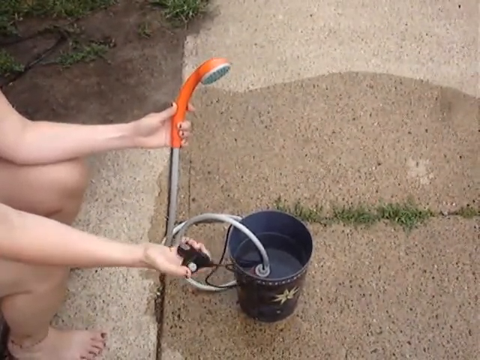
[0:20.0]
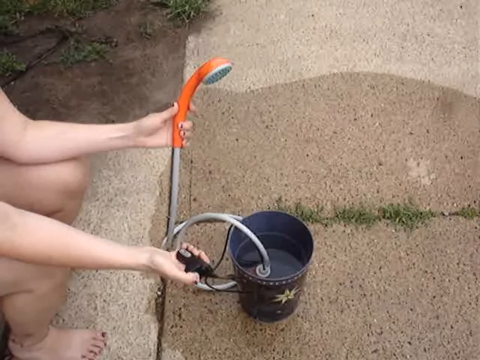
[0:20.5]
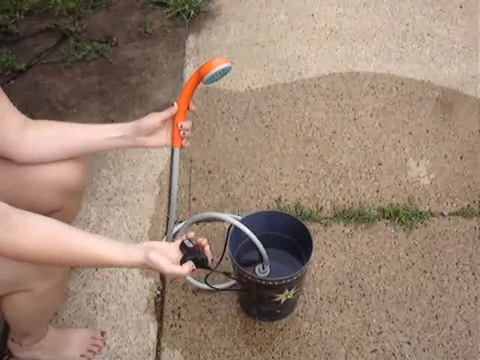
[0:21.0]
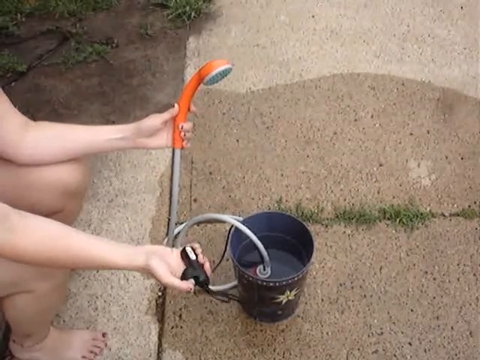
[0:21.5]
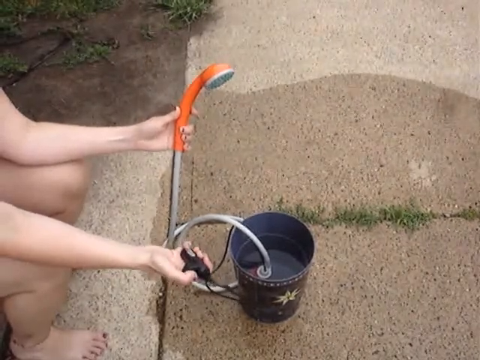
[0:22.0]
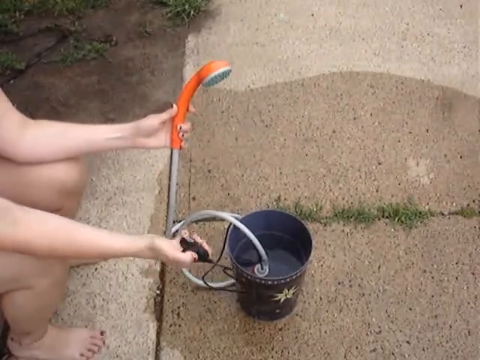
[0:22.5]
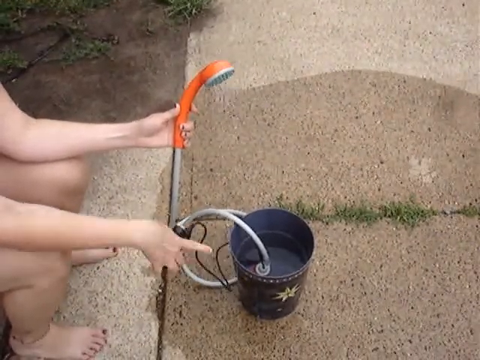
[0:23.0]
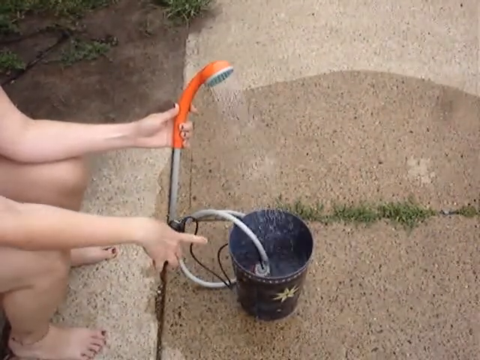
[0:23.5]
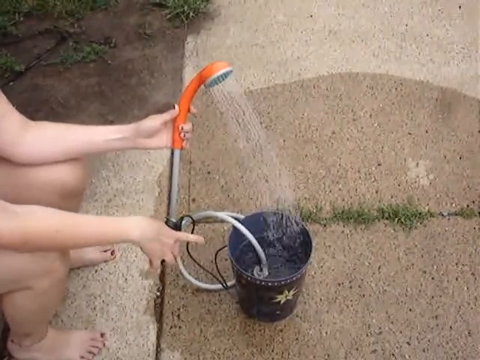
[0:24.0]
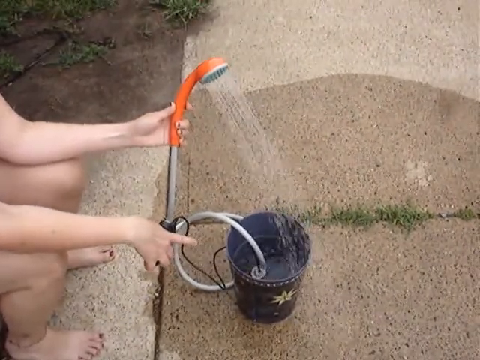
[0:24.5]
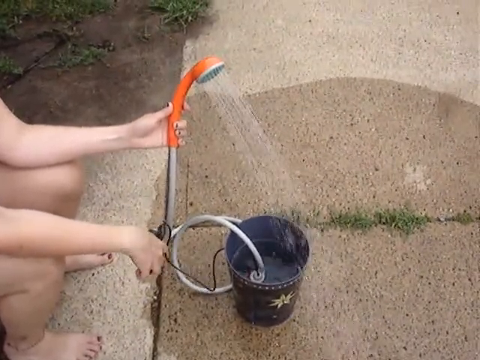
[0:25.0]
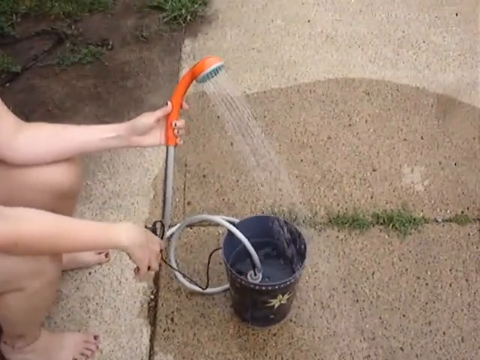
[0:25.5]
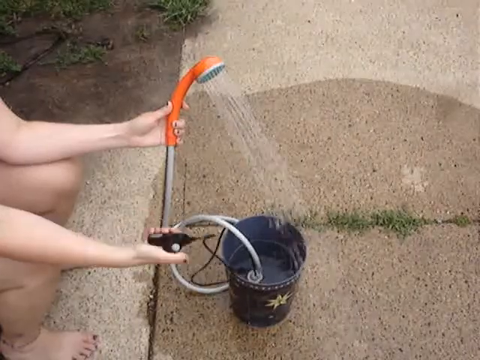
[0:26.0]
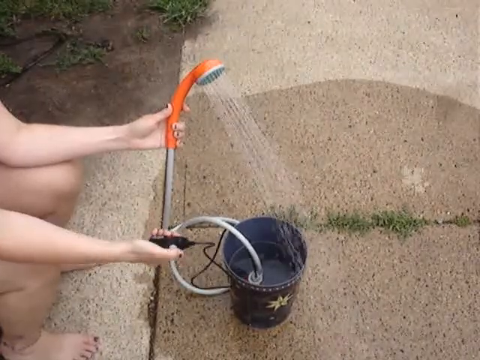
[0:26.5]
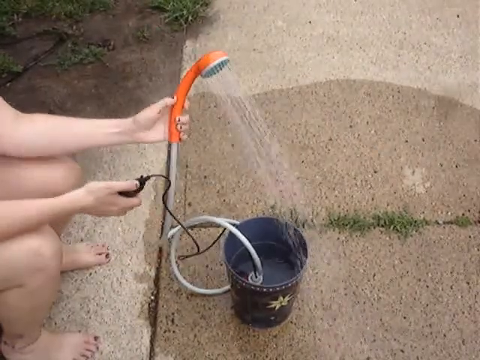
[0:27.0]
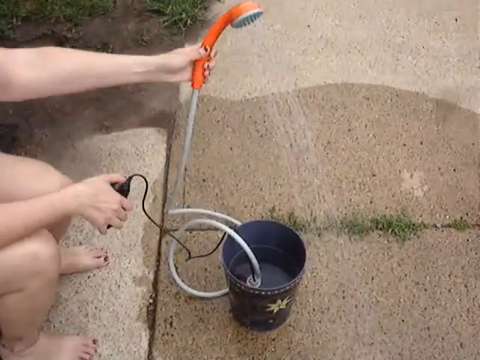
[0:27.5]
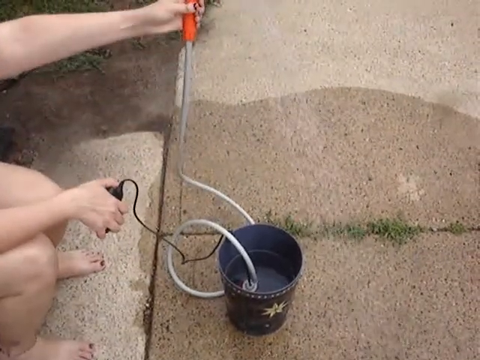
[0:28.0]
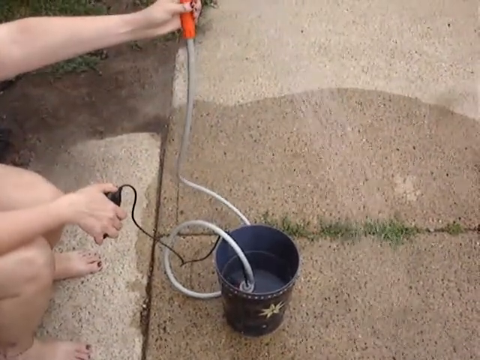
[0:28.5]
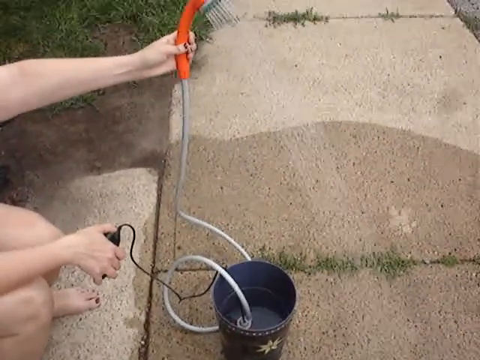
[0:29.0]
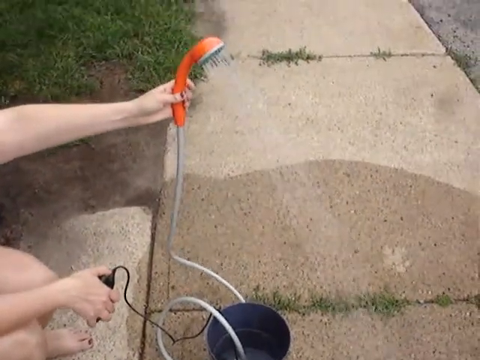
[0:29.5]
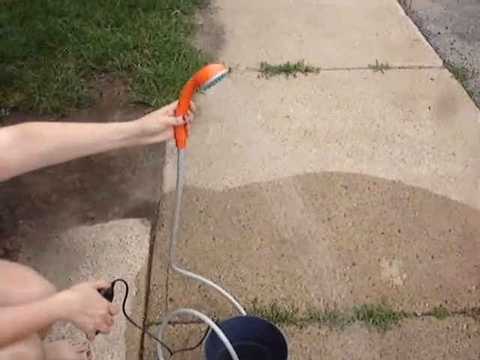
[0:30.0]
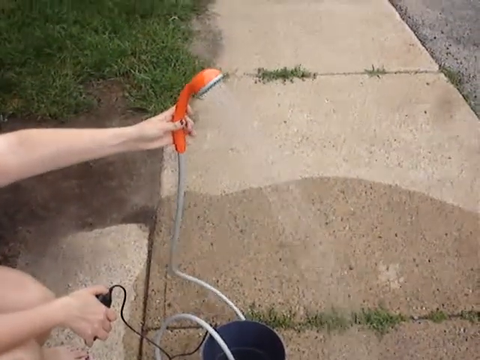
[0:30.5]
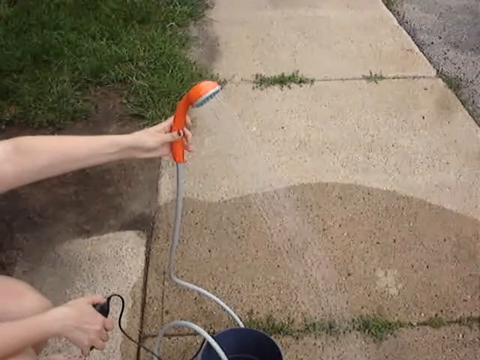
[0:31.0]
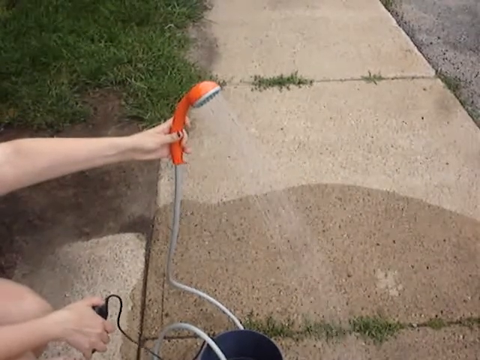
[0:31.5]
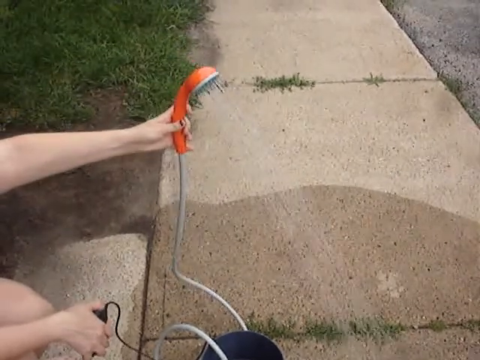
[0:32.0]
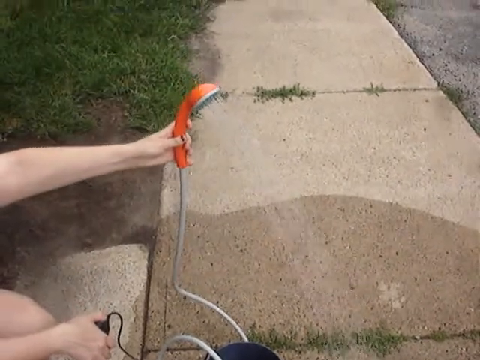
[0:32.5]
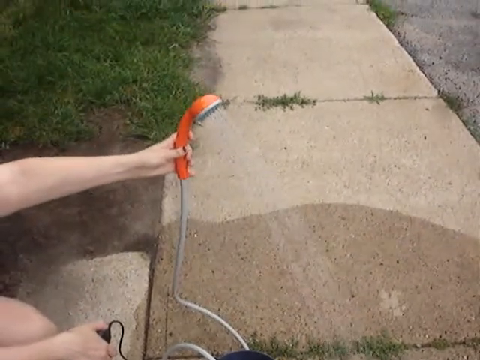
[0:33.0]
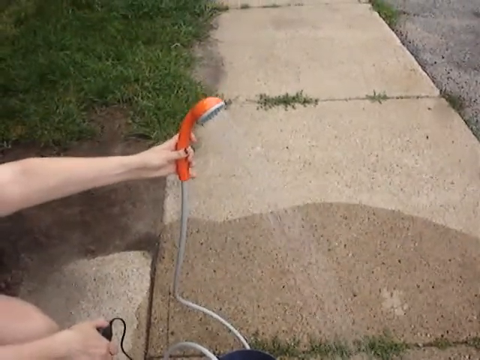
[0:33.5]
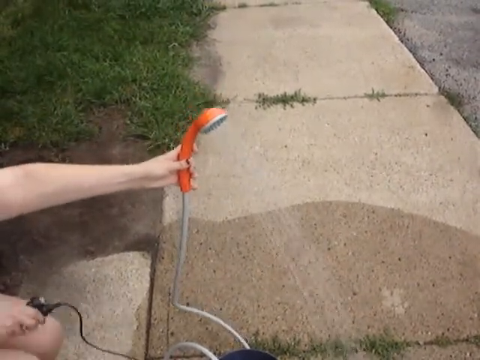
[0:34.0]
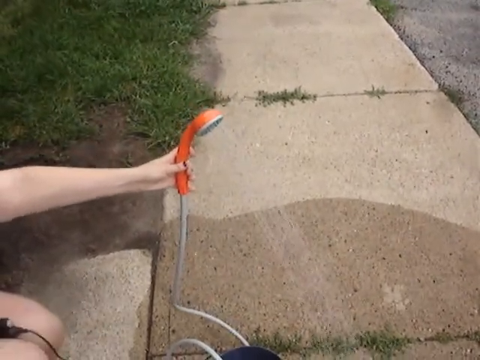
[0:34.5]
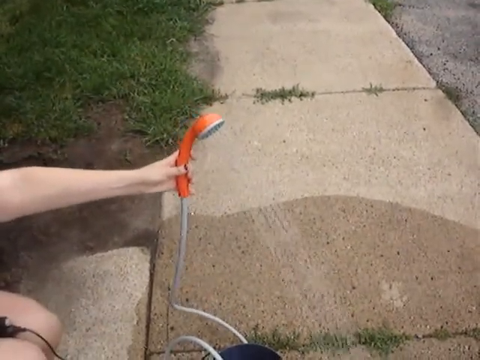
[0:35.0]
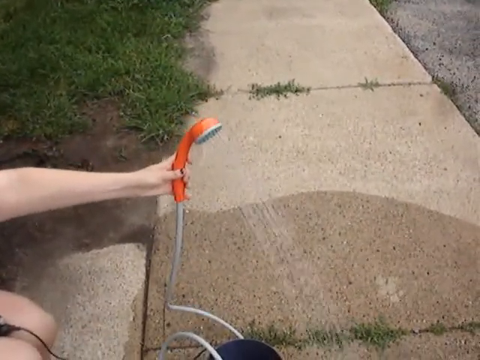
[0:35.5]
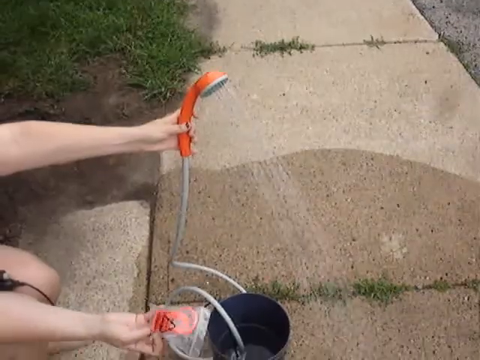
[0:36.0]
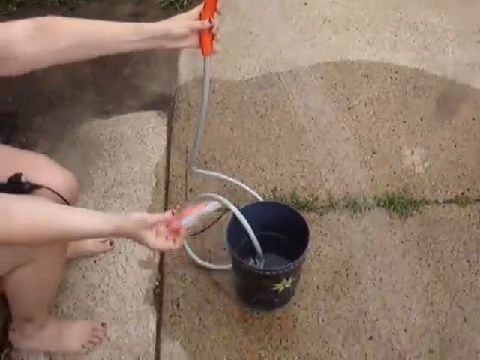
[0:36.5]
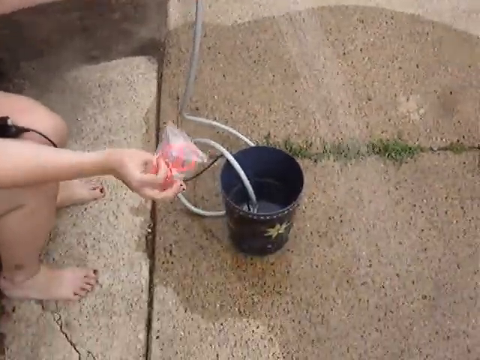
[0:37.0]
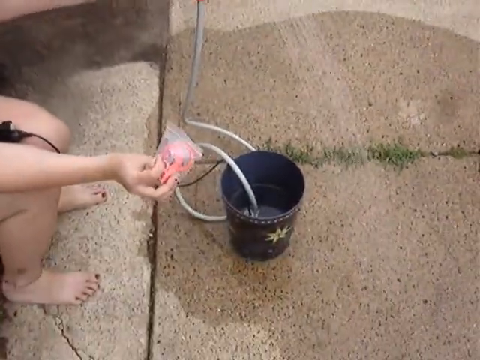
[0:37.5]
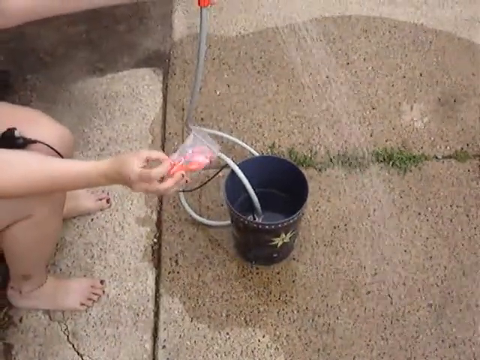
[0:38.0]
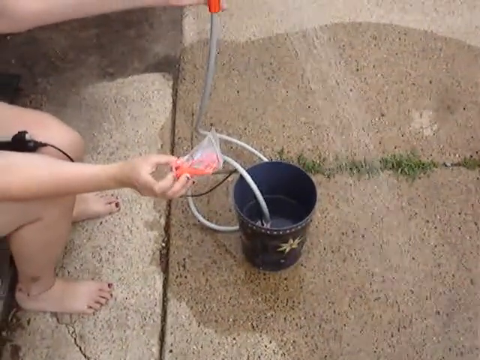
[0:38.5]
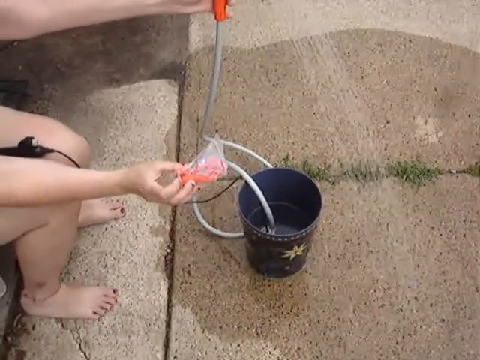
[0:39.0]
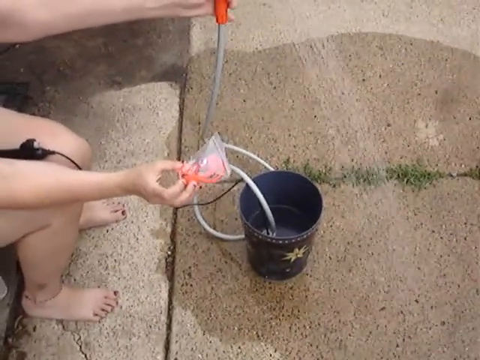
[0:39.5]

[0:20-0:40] The person is sitting on the pavement, holding an orange shower head in the left hand and a remote in the right hand. The person presses the button on the remote in the right hand, and water is dispensed from the bucket, which contains the inlet pipe for the shower head and the water pump for the contraption. The remote's wire goes straight into the bucket, suggesting the water pump is battery powered. The shower head switches on and sprays water with force, and the camera pans to focus on the water being sprayed onto the pavement. After a few seconds, the camera pans downward and the person's right hand comes into view holding a square plastic packet with a pink item inside.